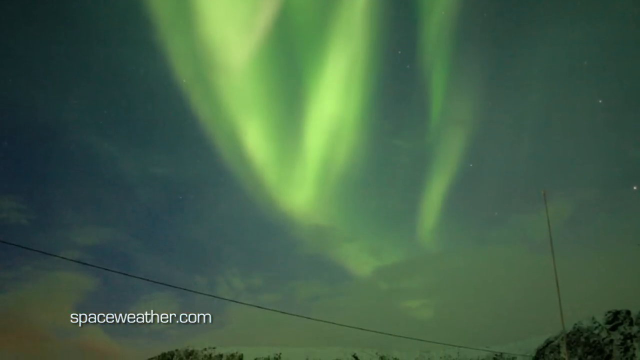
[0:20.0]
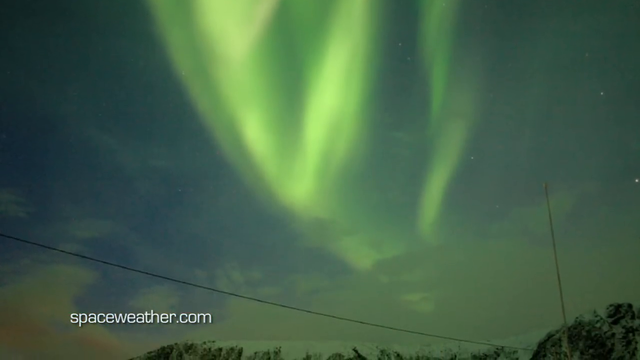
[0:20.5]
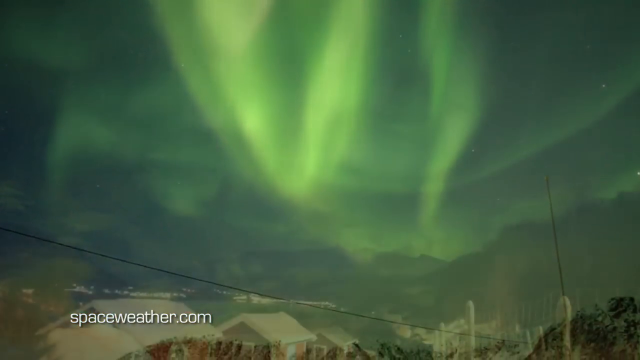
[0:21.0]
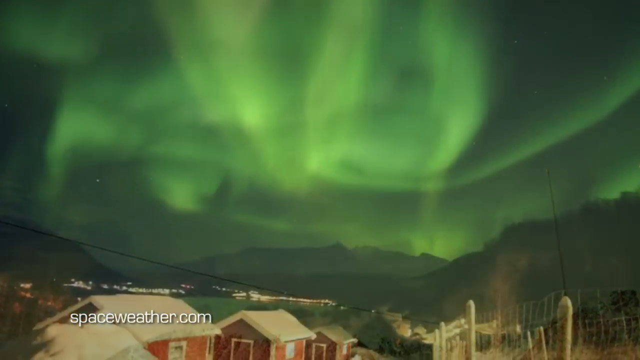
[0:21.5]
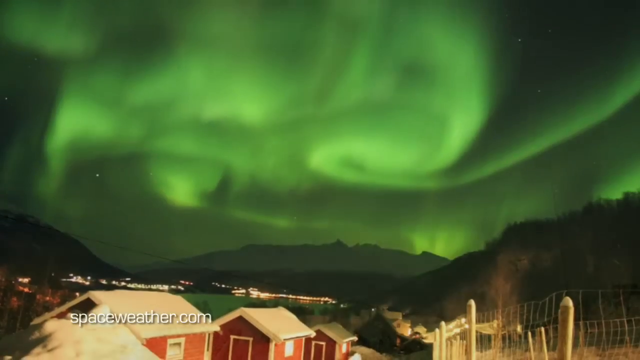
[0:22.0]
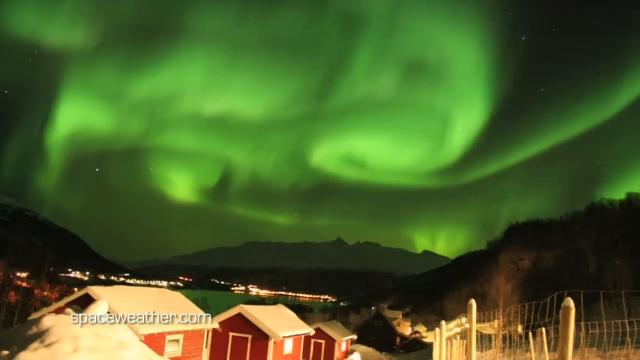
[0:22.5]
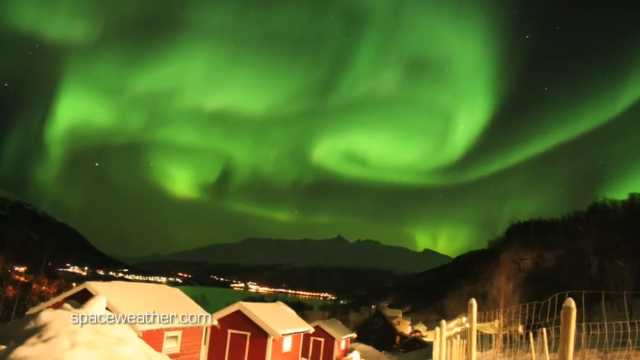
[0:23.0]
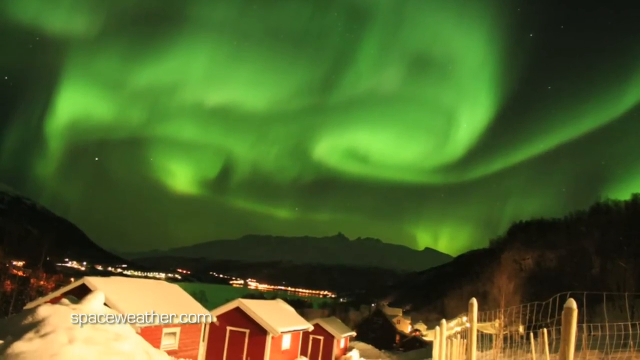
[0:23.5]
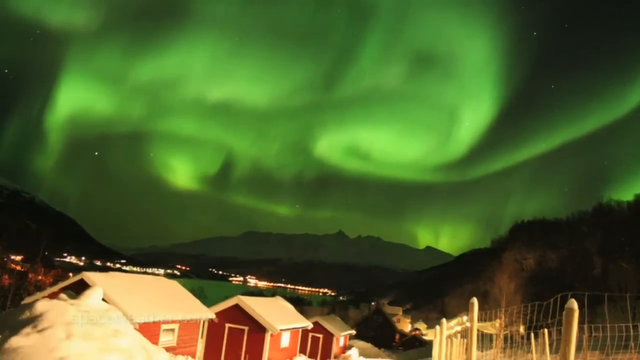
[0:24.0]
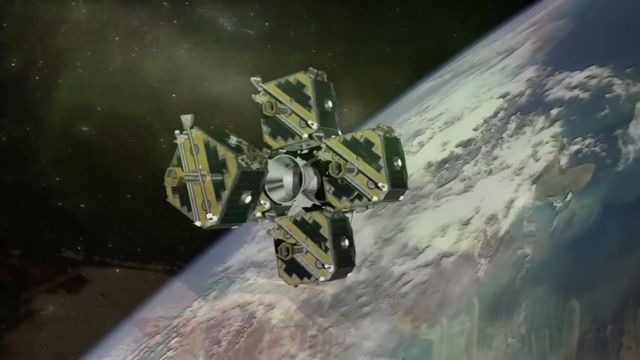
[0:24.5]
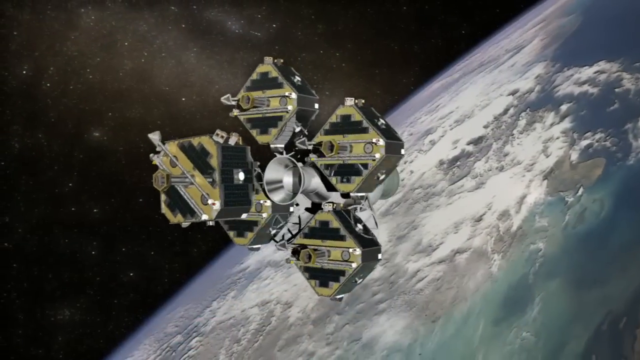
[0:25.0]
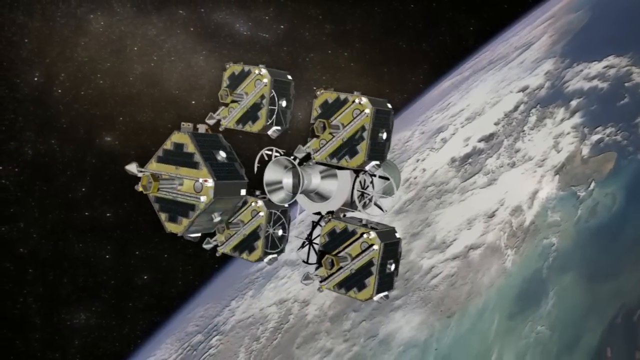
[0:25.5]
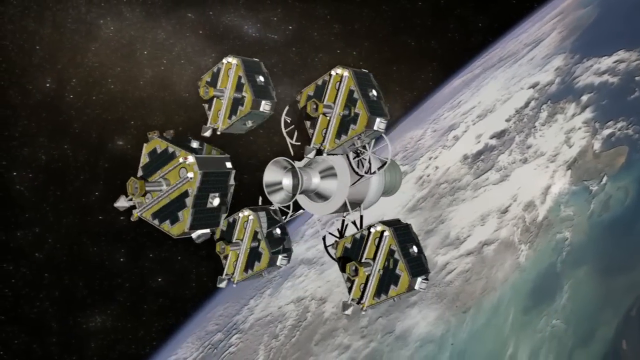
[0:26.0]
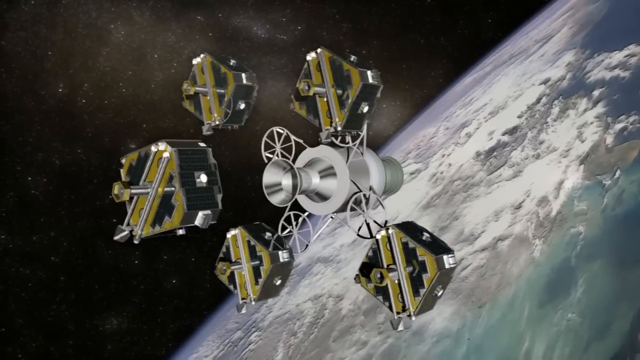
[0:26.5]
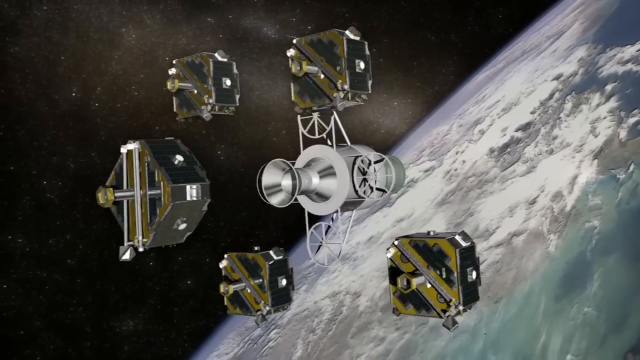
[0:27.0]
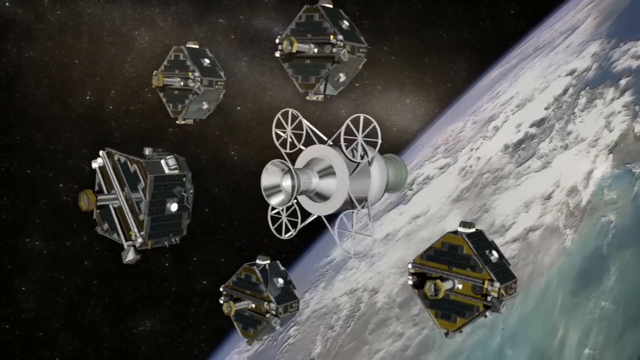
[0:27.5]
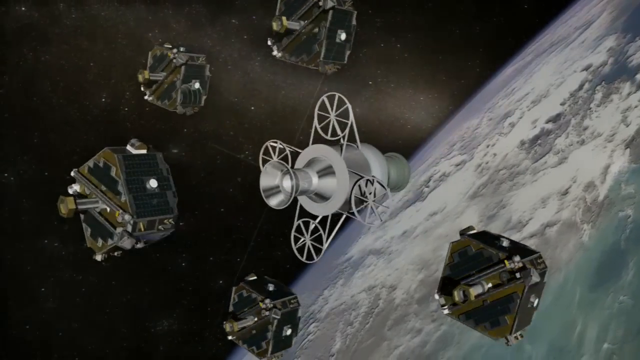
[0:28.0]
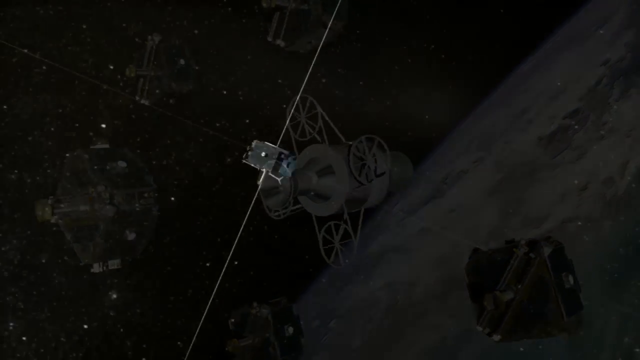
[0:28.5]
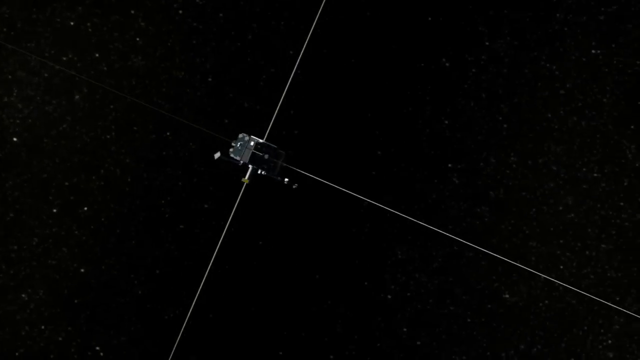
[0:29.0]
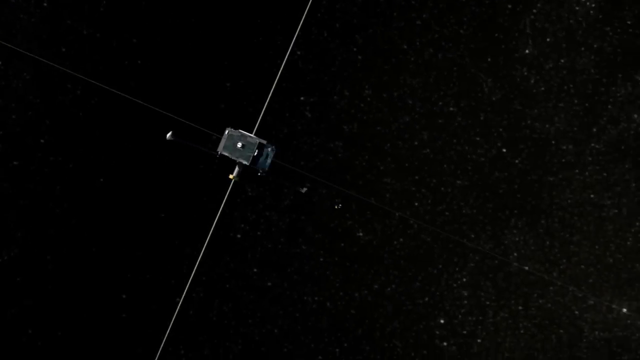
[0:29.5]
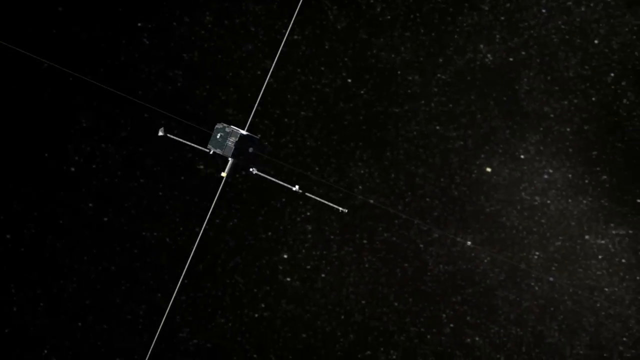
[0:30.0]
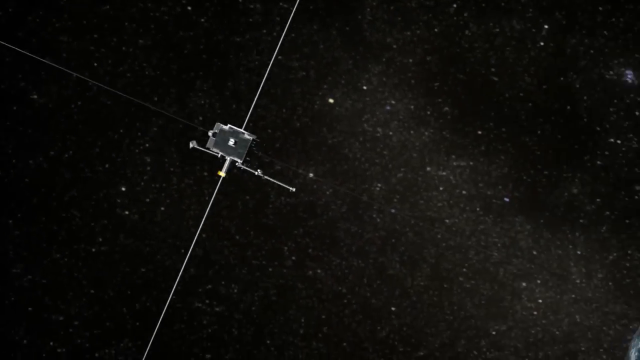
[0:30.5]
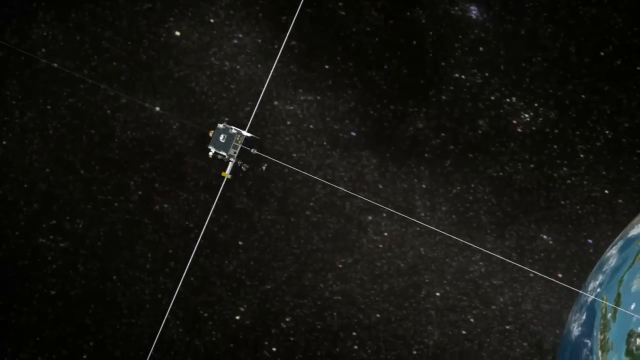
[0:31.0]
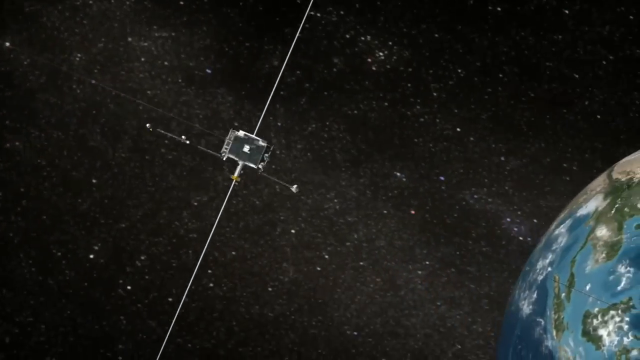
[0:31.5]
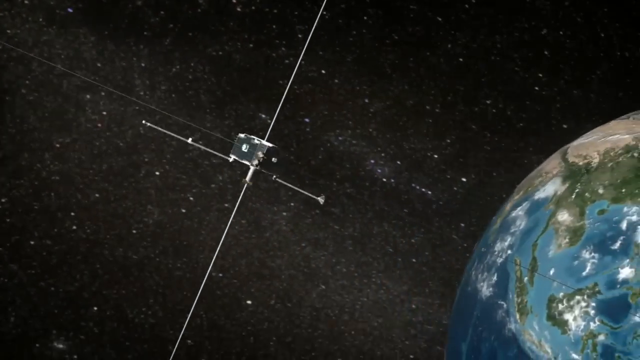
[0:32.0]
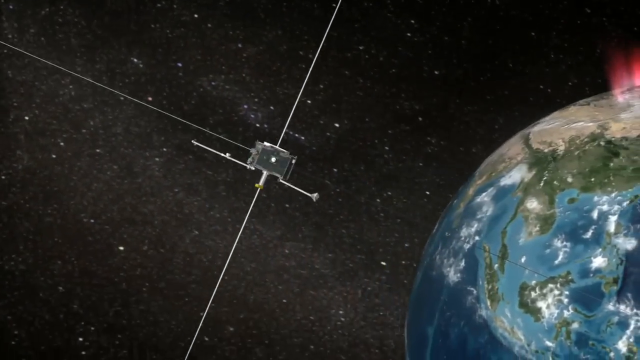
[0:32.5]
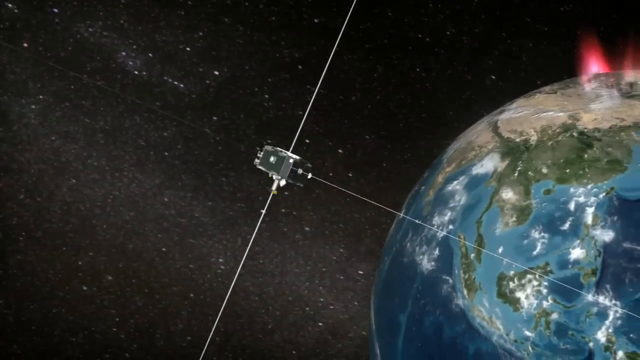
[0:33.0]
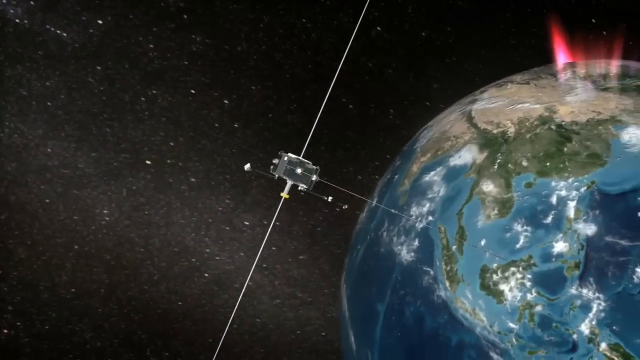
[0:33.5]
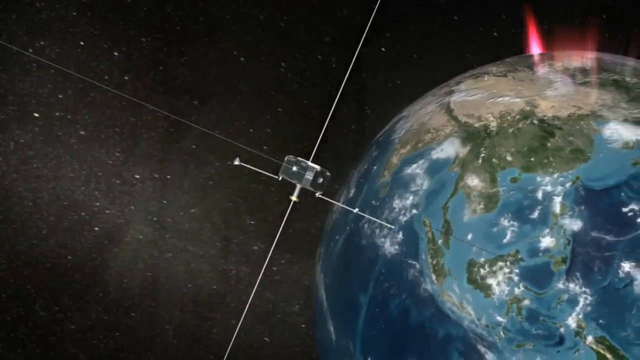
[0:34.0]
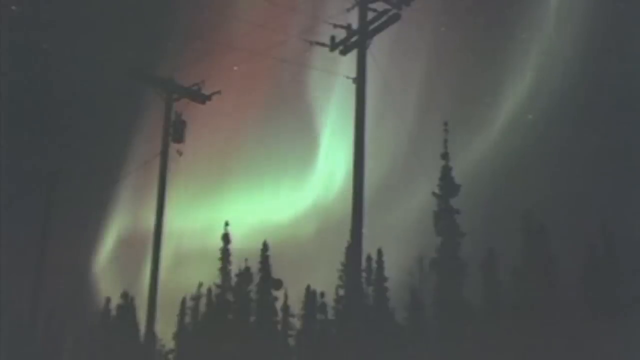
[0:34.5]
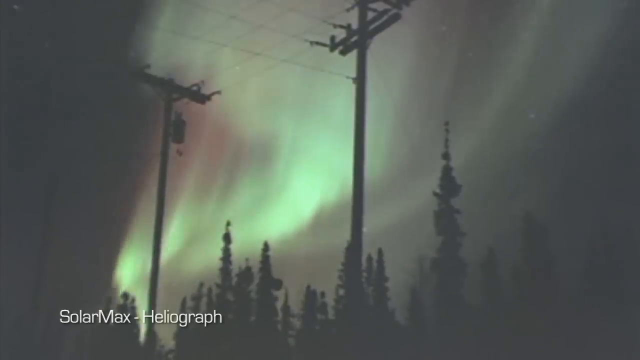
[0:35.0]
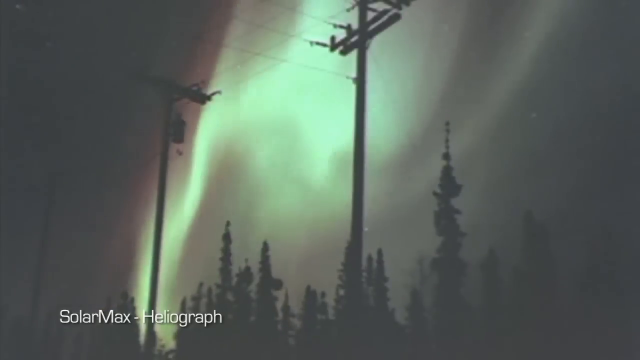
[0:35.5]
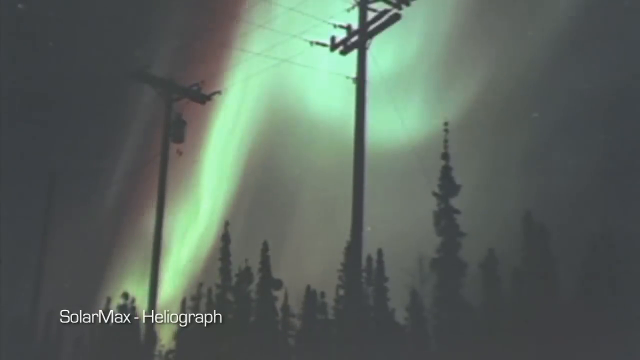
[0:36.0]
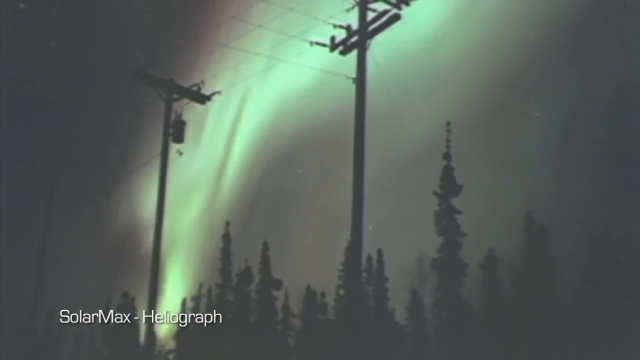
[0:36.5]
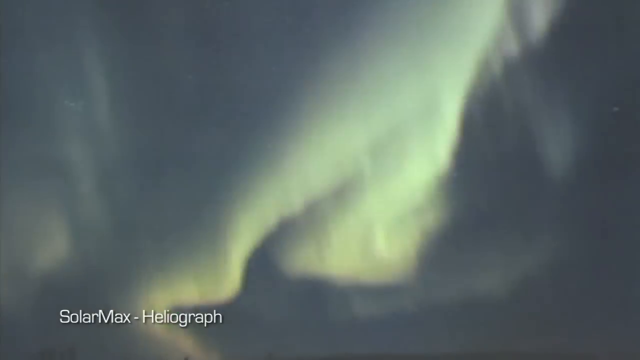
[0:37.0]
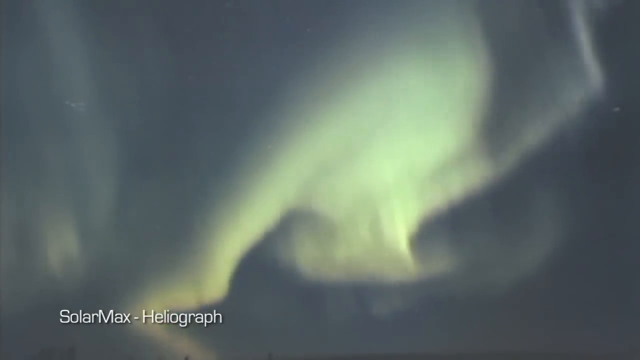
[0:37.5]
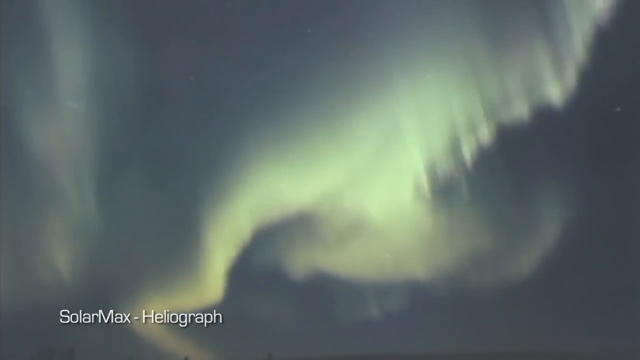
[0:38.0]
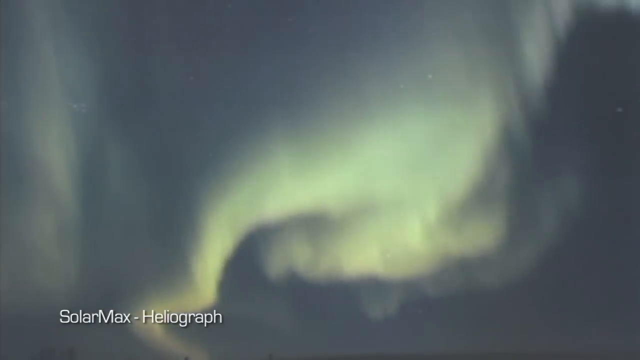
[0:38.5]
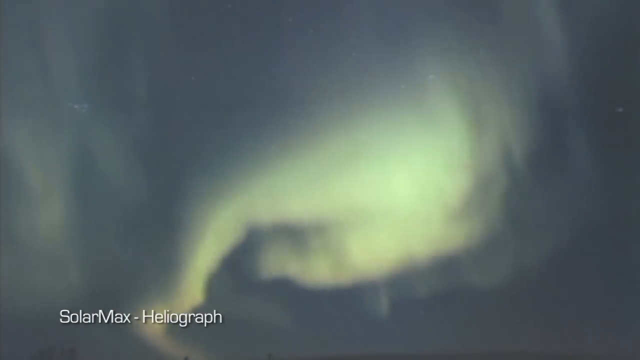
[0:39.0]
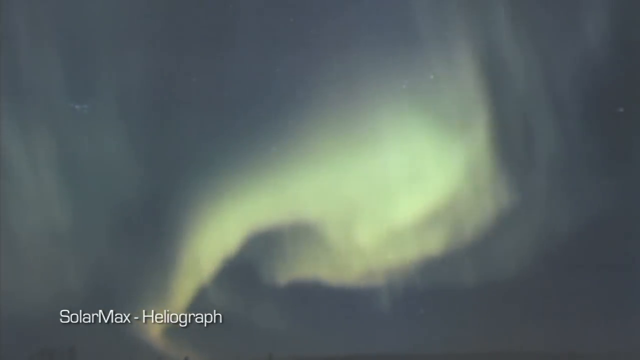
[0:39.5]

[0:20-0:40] The night sky is dark, and in the middle of the screen a large green section of sky looks like the aurora borealis. As the camera pans down, houses, fields and mountains appear beneath the sky, all bathed in the green glow. The view switches to the Earth from above, from space, with stars visible and a satellite orbiting above the Earth. The satellite has five square sections attached to a central pillar; the sections all detach and float away in five different directions into space. Another satellite, a small black box with four spikes coming out of it, rotates above the Earth. More images of the aurora borealis follow, lighting up two telegraph poles standing up on the road.